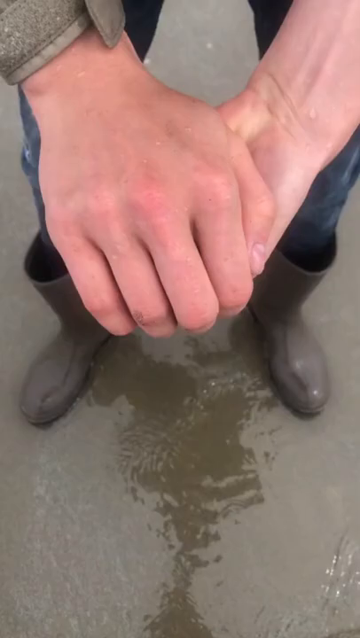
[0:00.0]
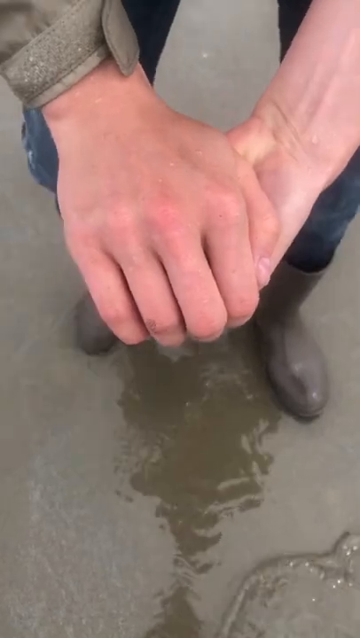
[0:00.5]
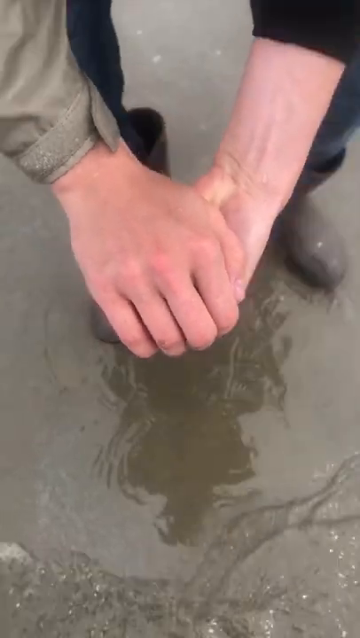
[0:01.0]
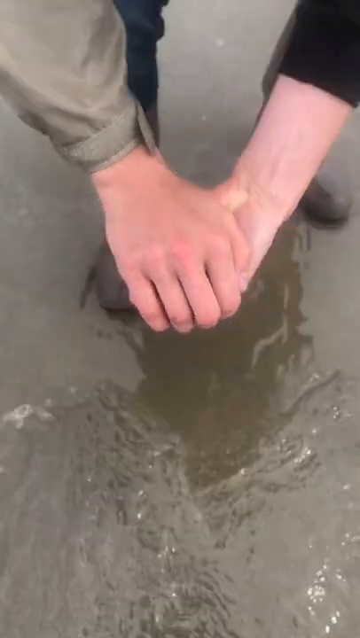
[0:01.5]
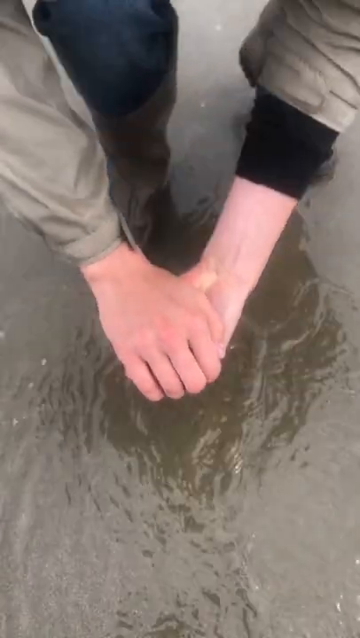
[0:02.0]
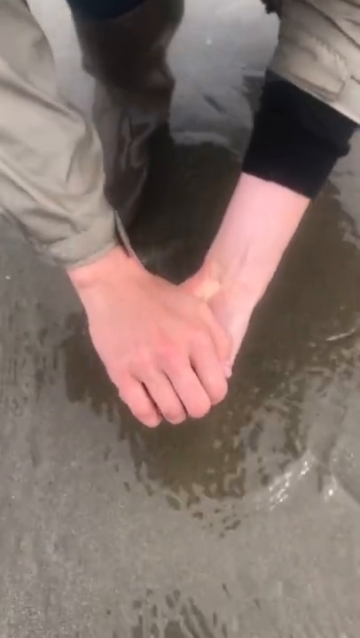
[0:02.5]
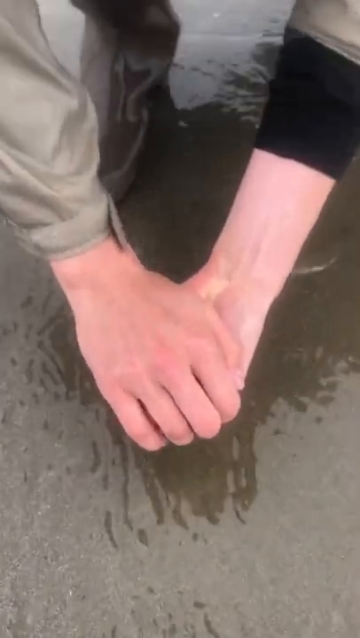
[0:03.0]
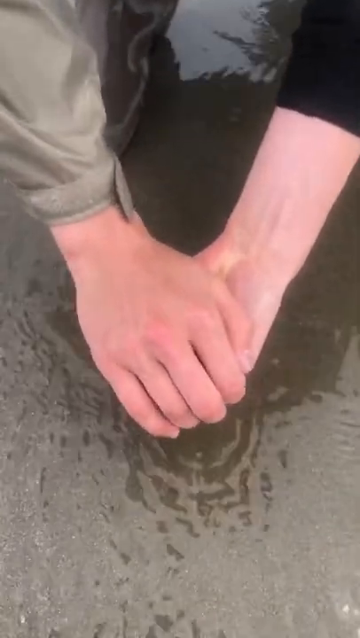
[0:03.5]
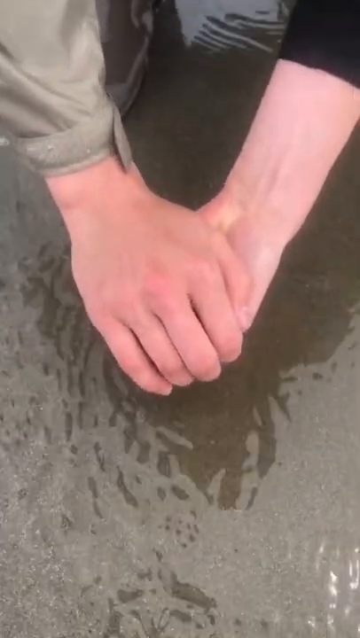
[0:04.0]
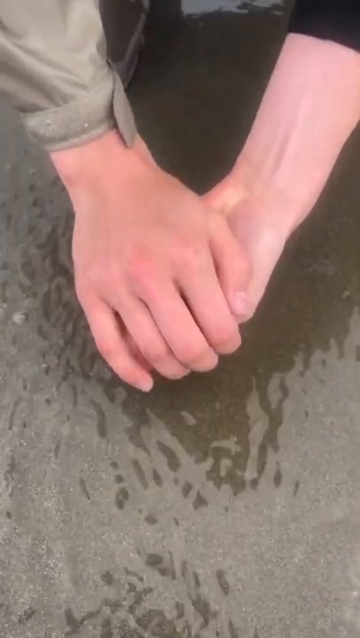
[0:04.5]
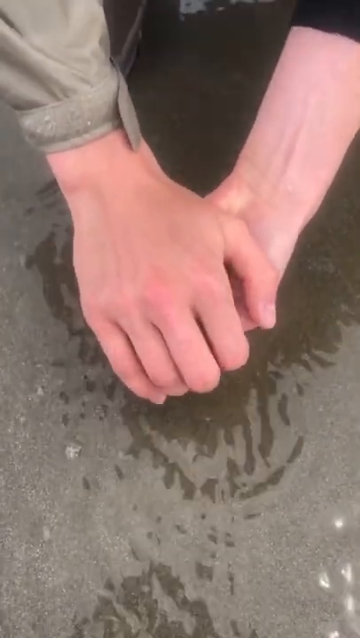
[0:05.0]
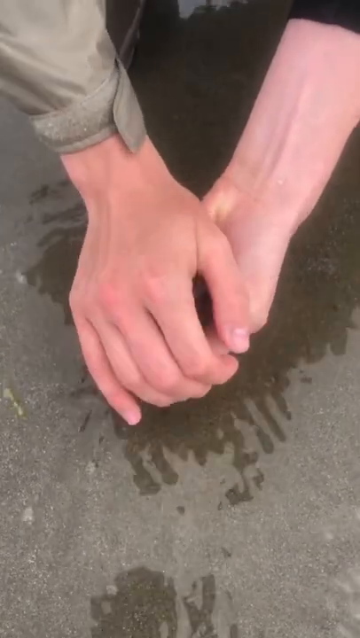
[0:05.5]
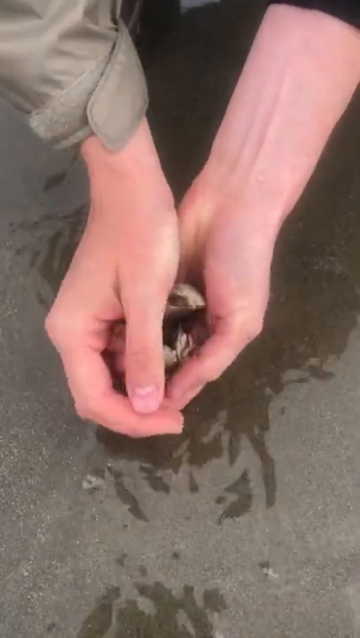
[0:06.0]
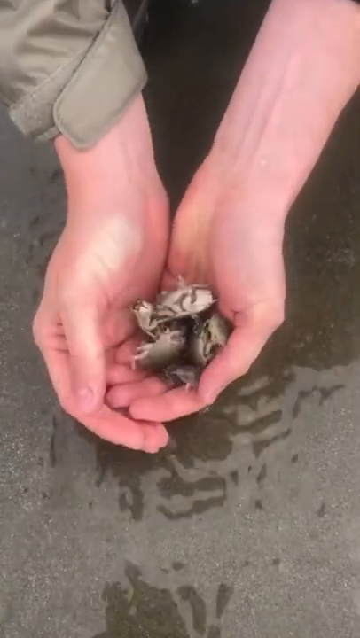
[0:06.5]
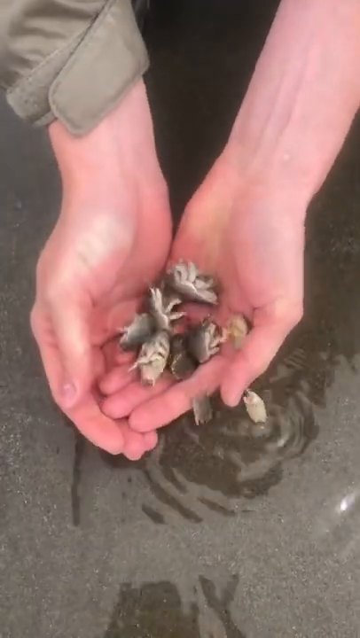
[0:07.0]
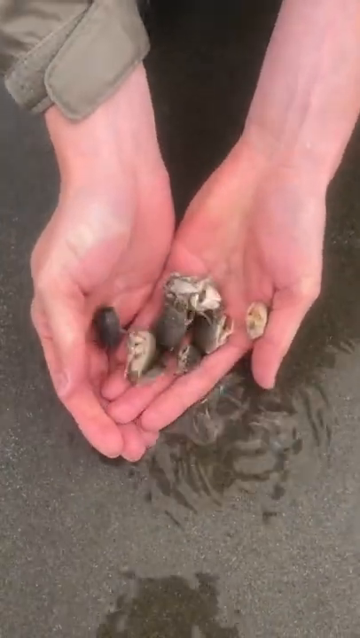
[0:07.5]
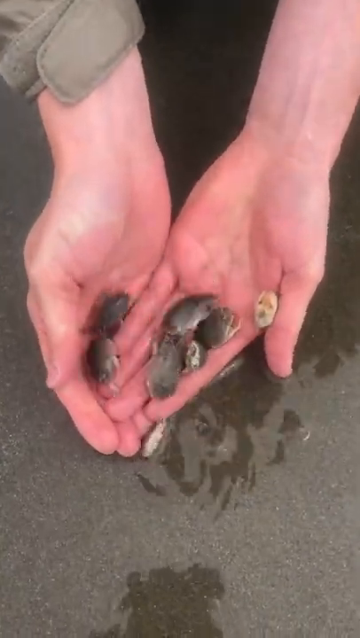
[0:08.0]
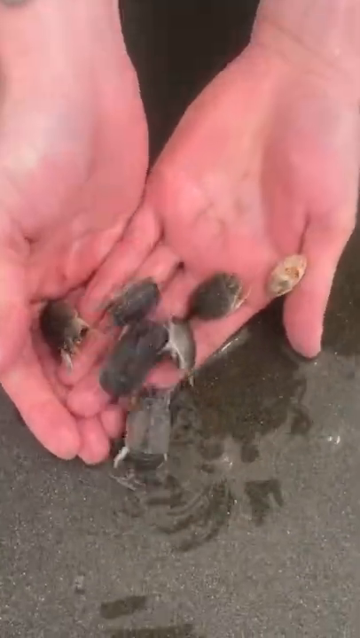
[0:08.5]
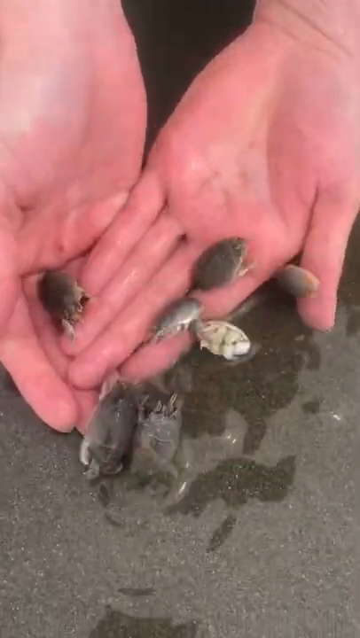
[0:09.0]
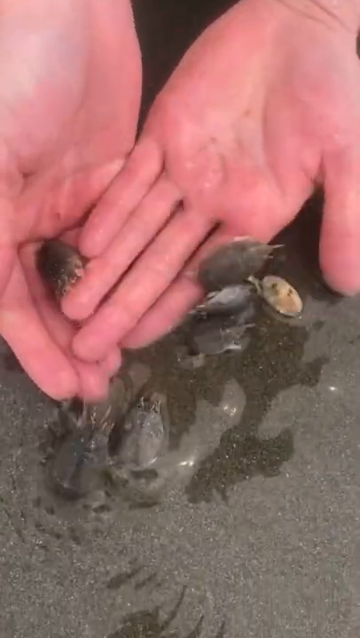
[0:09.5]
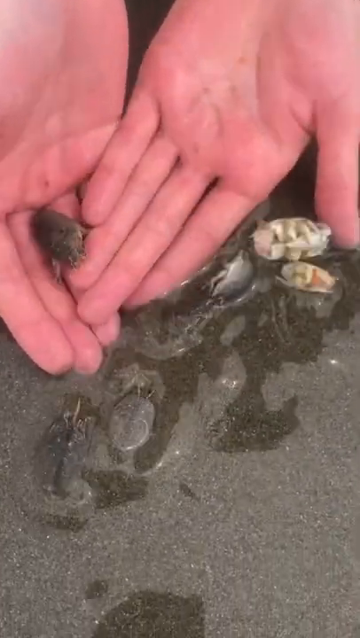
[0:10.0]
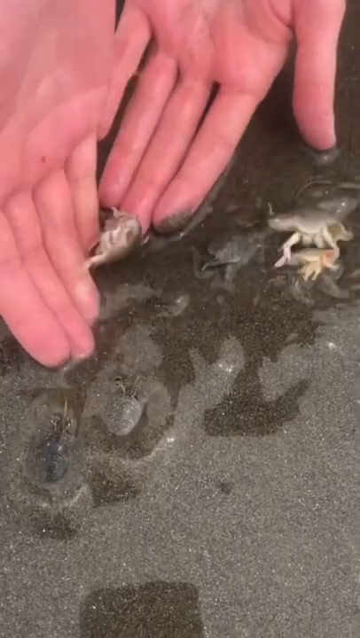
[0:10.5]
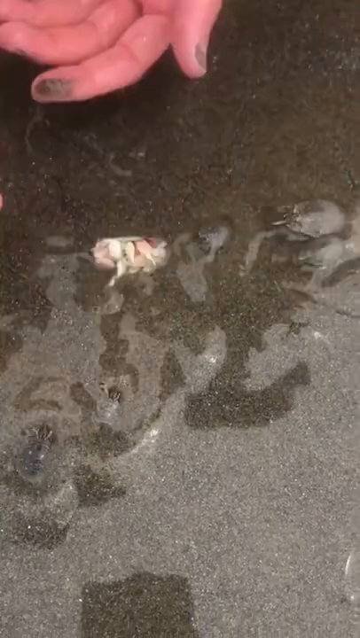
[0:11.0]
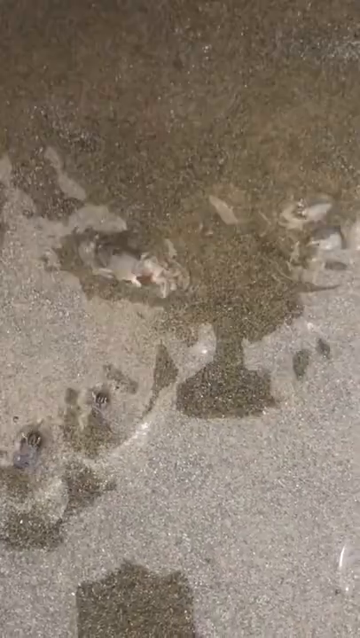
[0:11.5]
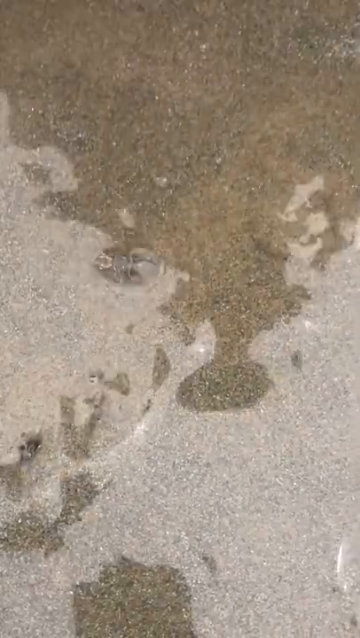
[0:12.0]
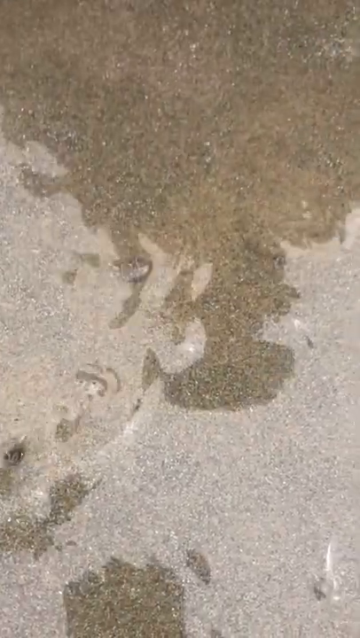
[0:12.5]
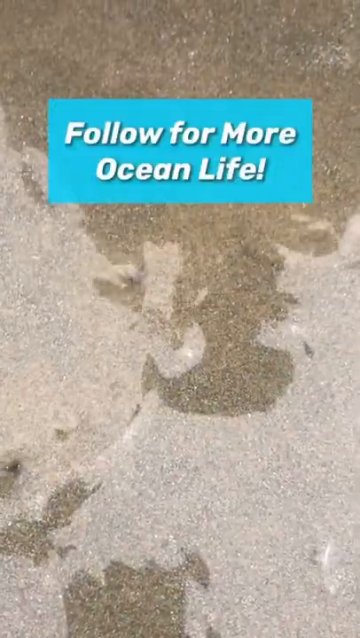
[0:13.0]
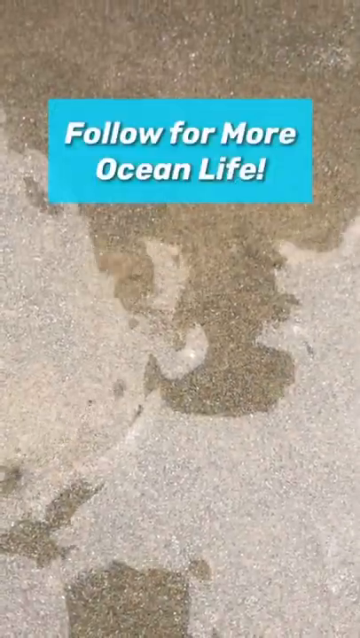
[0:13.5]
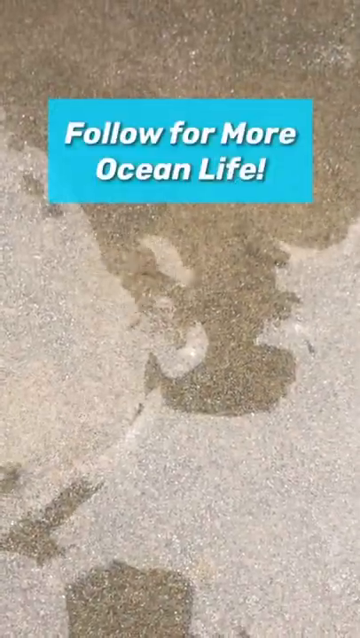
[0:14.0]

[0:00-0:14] An individual wearing a jacket holds one hand over the other as if covering something in his hand, and there is a puddle where he is standing. The camera gets closer and zooms in more on his hands, and he reveals what look like several different bugs, about eight in total. They all have a shell, and the bugs bury themselves into the sand beneath the puddle. At the top of the frame, white text on a light blue background reads "follow for more ocean life".